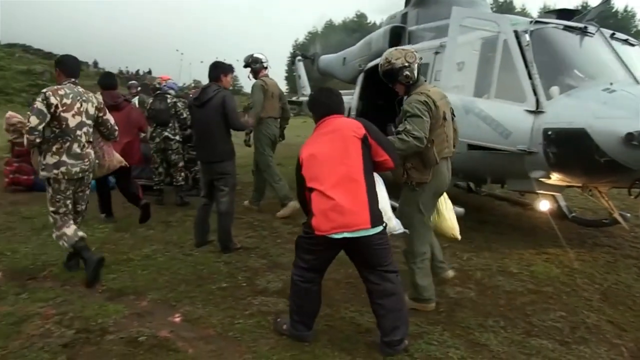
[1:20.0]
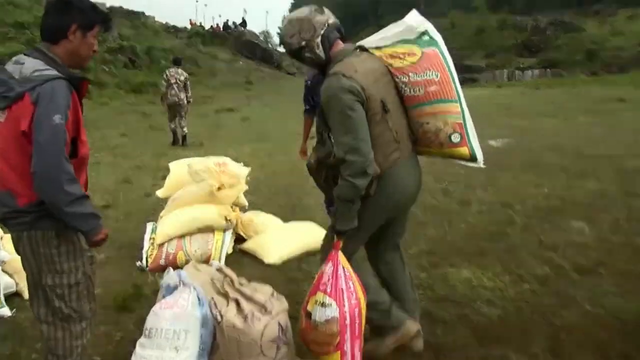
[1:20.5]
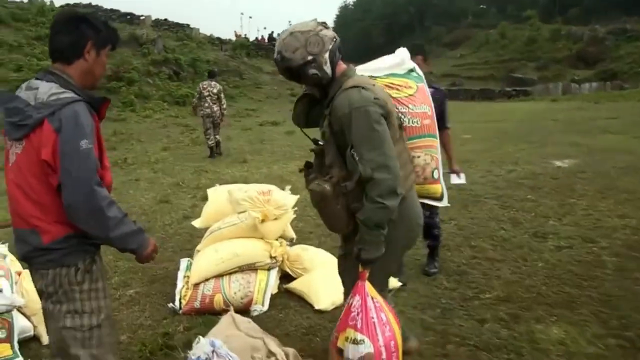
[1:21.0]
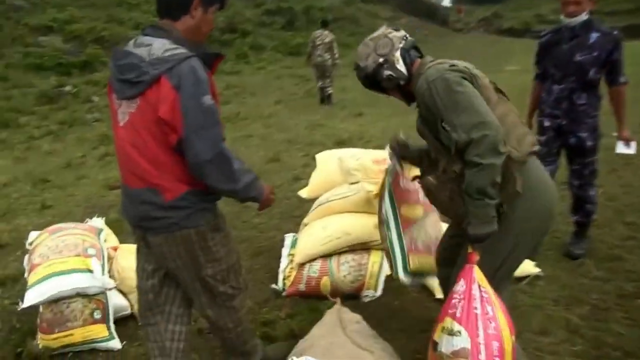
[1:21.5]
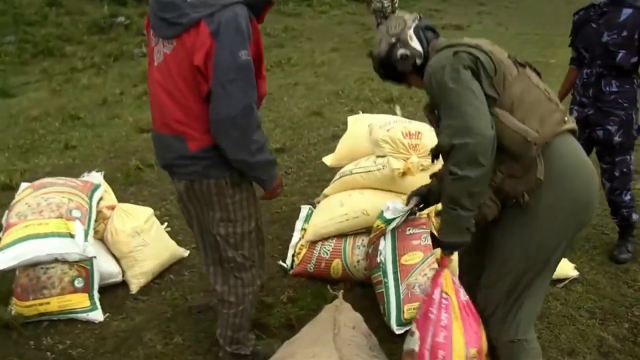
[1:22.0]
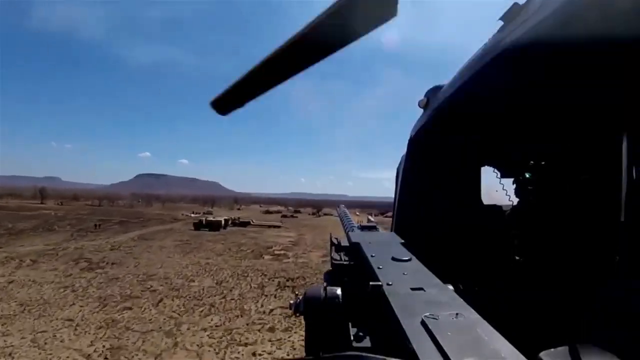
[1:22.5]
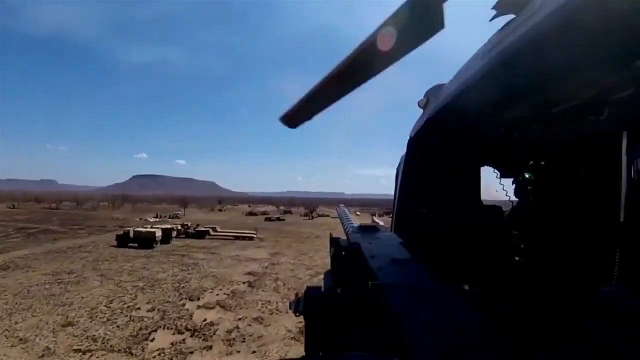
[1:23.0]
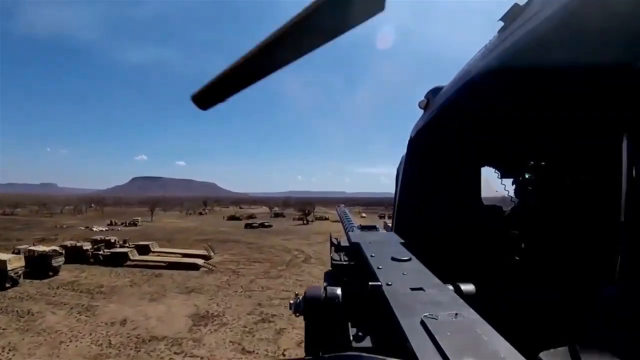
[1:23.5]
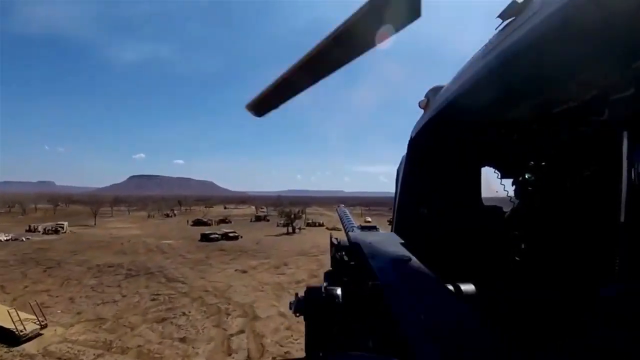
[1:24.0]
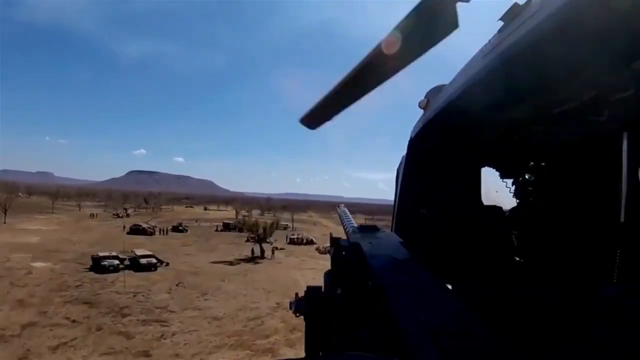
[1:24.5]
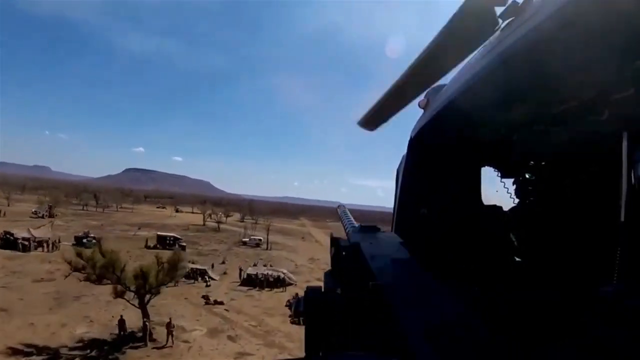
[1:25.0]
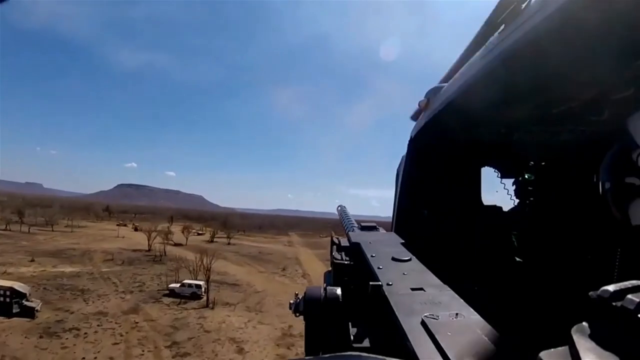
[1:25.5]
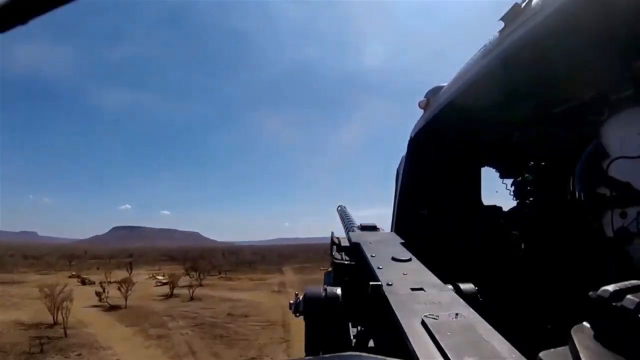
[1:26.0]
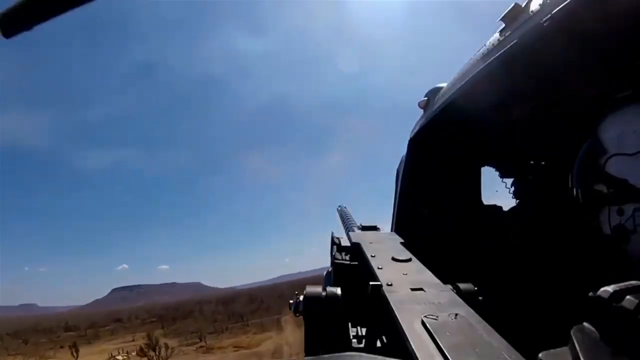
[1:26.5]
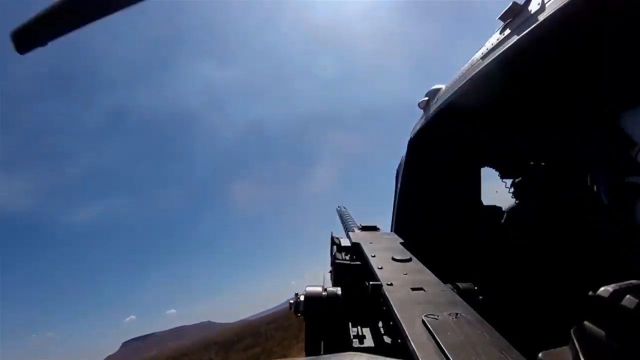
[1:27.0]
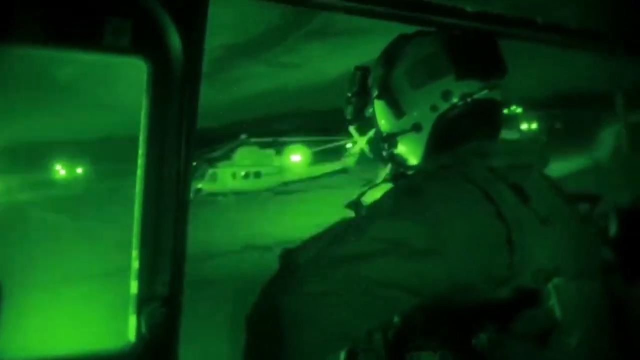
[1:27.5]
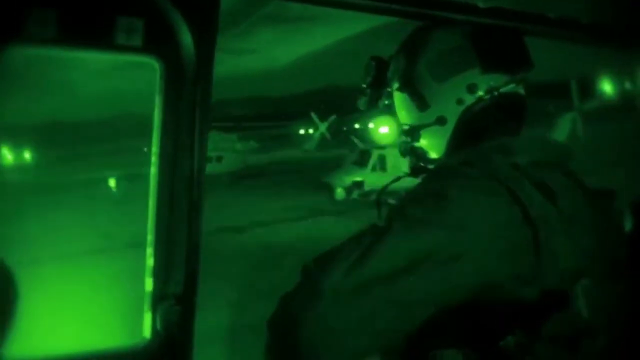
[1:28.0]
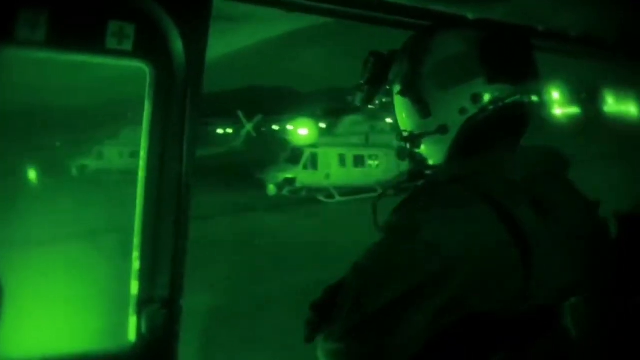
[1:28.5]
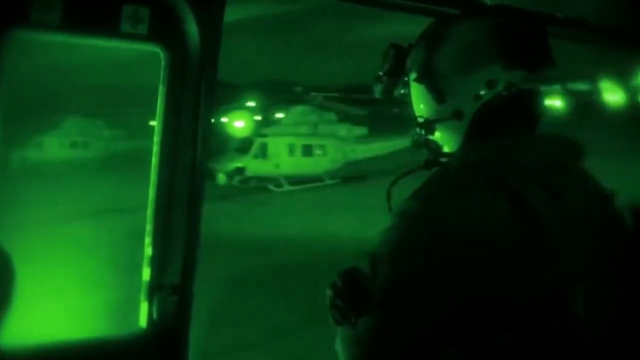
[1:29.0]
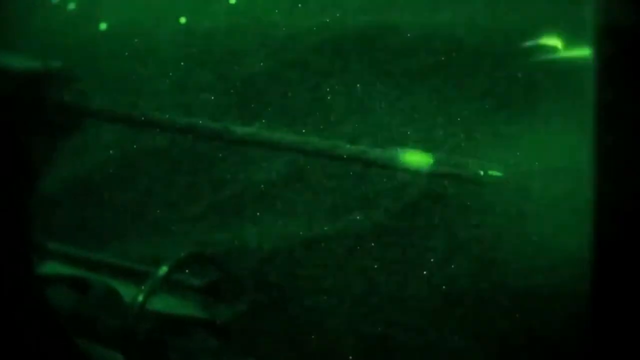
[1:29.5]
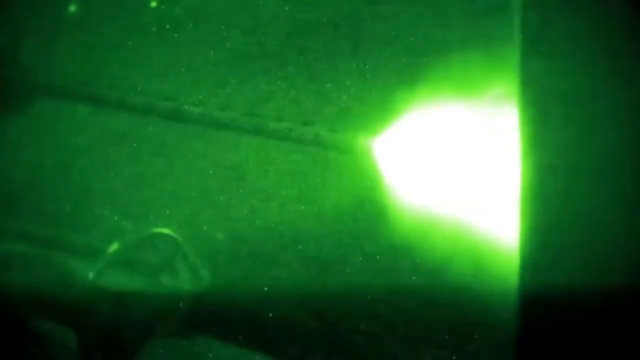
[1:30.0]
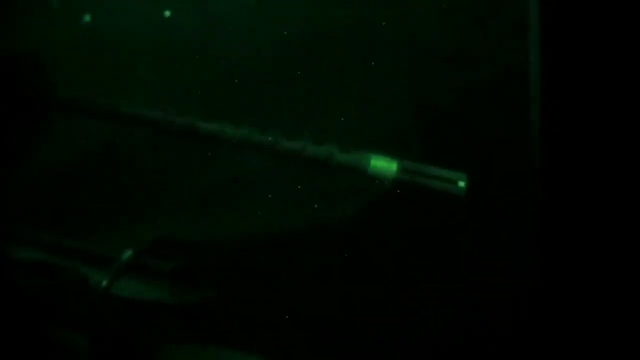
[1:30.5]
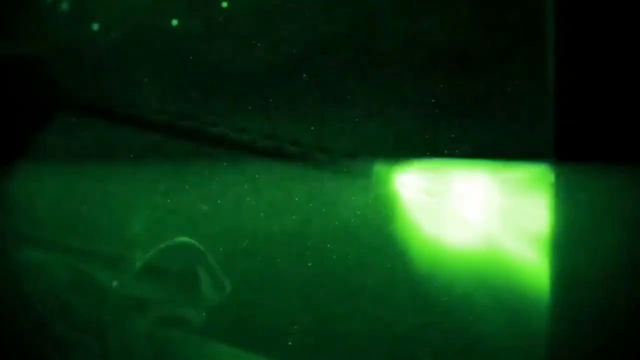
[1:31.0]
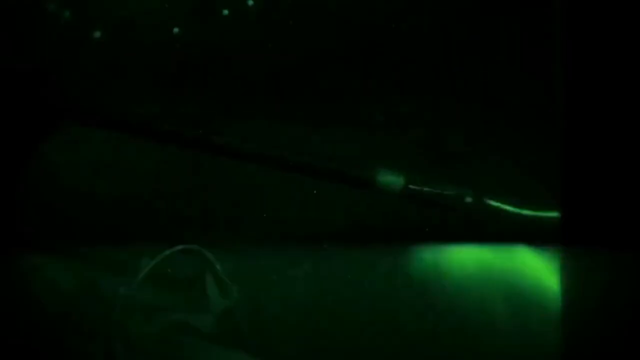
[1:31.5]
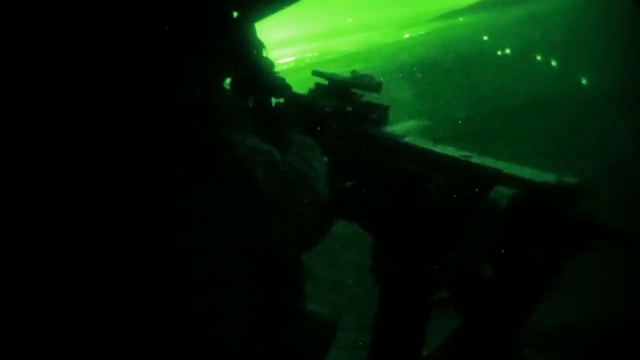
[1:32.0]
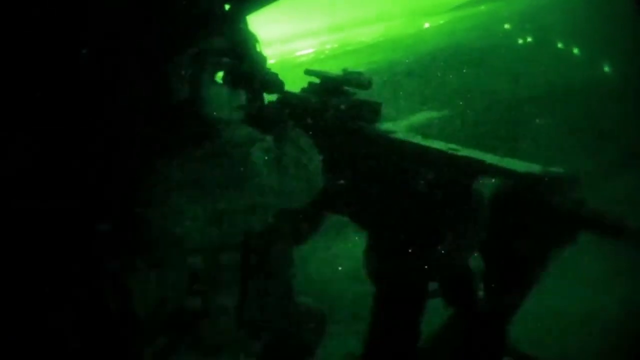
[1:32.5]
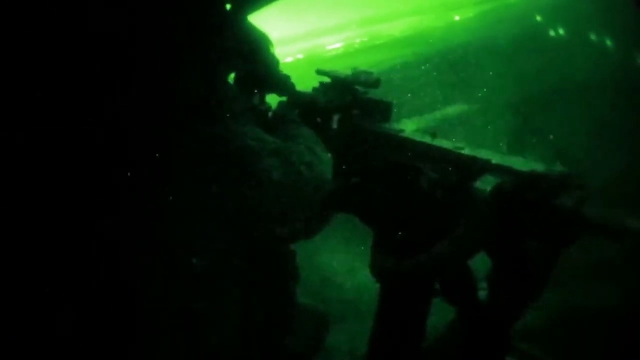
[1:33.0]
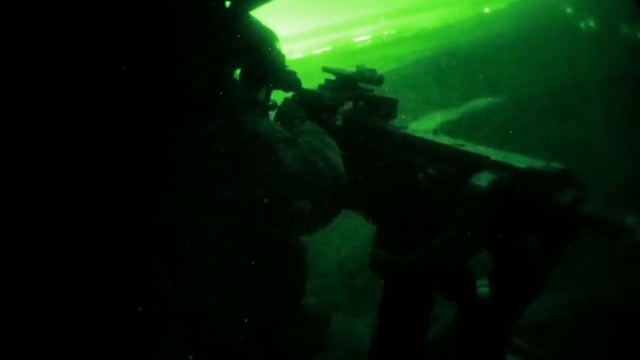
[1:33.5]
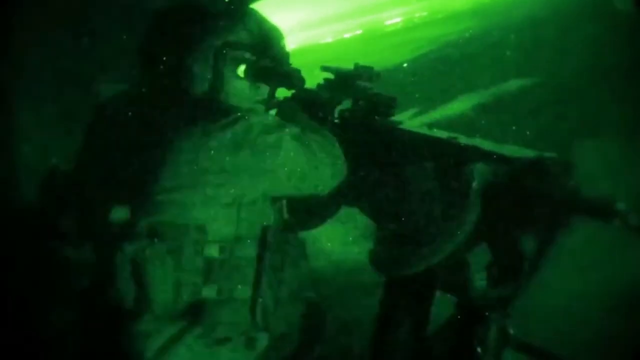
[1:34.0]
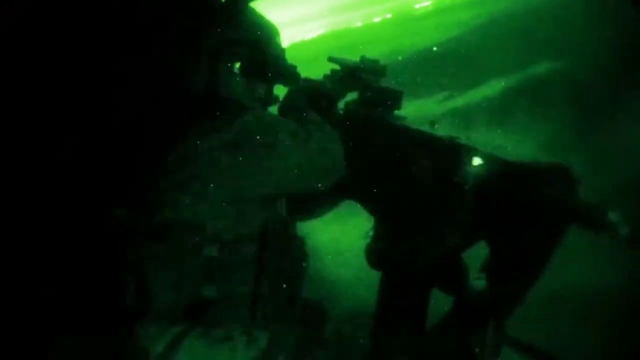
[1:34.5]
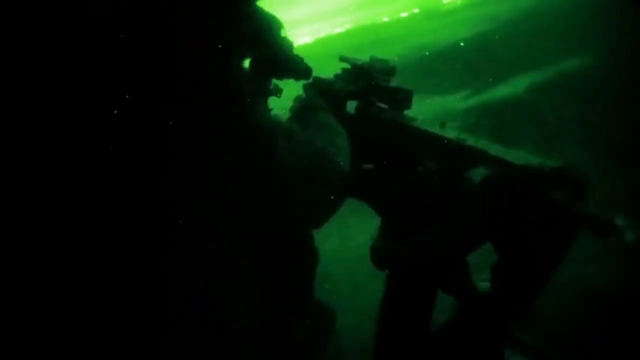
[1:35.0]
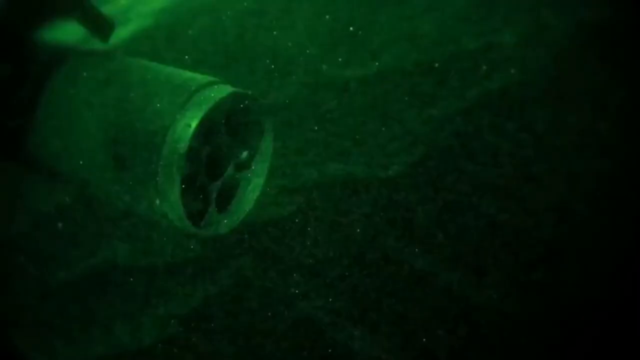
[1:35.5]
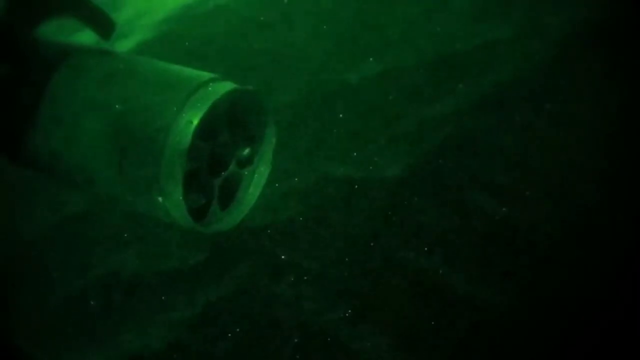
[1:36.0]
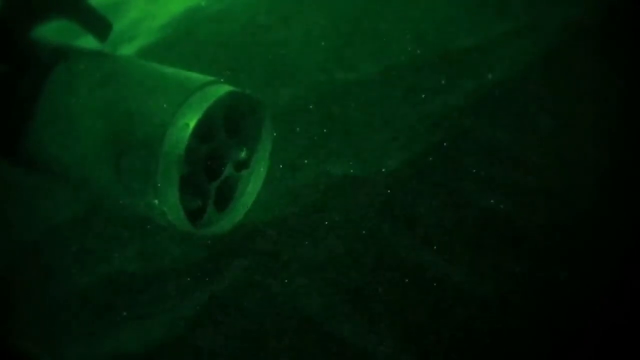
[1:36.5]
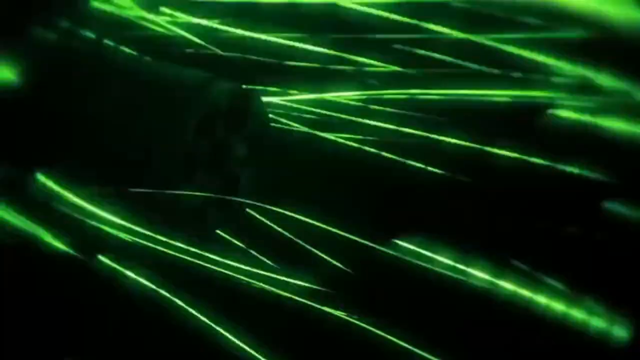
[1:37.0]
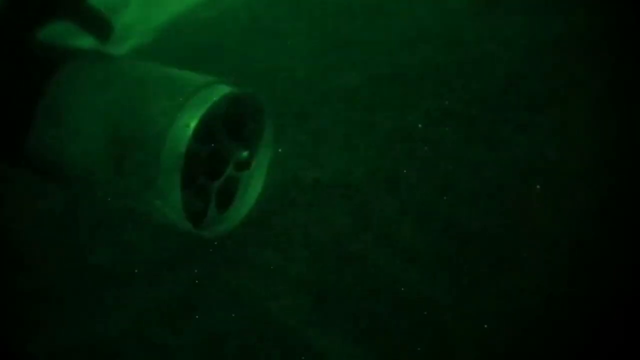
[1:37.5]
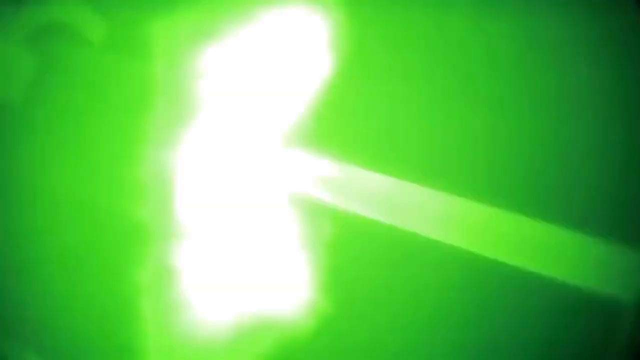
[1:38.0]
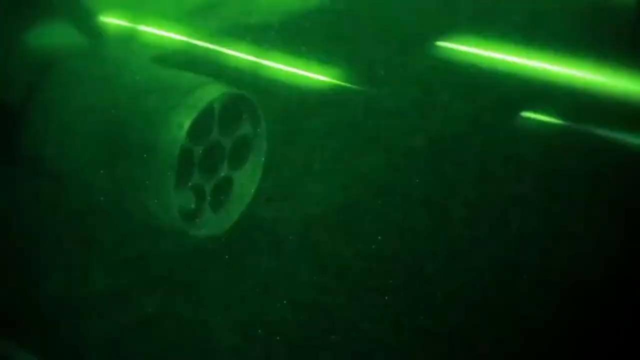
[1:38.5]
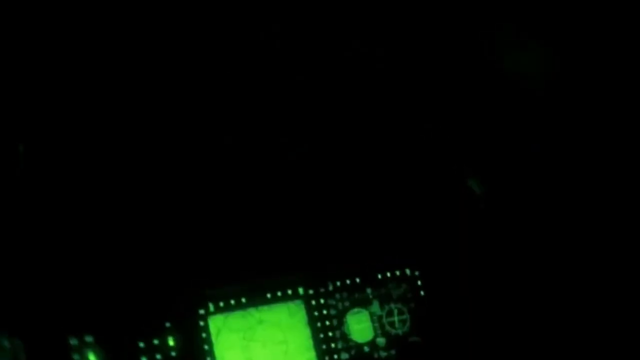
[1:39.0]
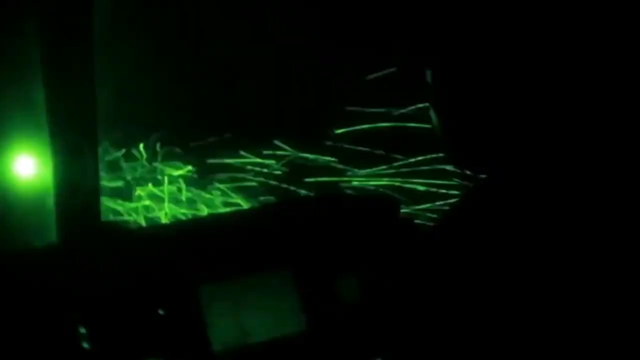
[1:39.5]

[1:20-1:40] Soldiers continue delivering food and supplies to a group of natives in a South American country. They appear to be bringing sacks of beans and rice and similar dry goods and staples, which the natives seem very happy to receive. Foreign soldiers are also present while the Marines drop off the supplies. An attack chopper is in flight, and soldiers fire machine guns; a camera is mounted on a machine gun as the chopper flies. Using night vision, they fire their machine guns at something on the ground. A number of missiles are fired from the missile pod, and the footage seems to end abruptly. Whether this is a conflict or a training exercise is unclear.